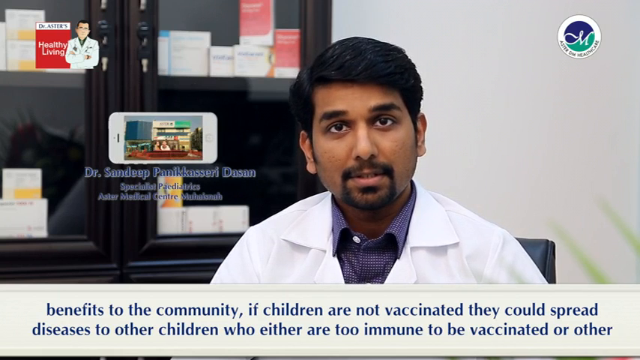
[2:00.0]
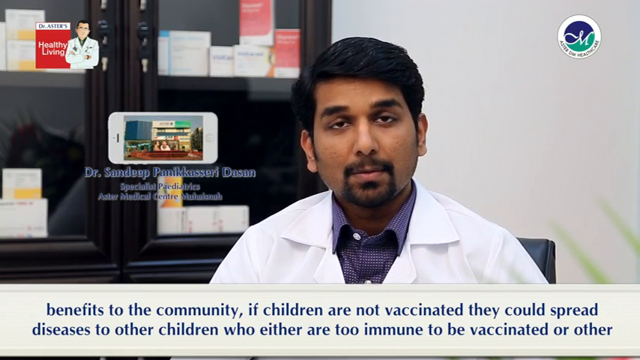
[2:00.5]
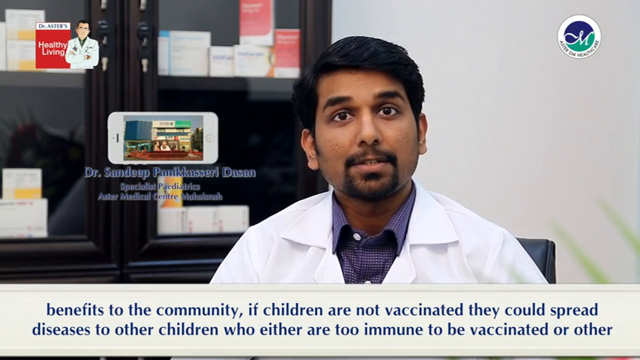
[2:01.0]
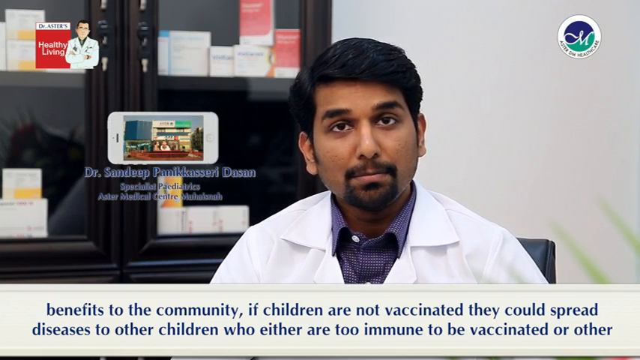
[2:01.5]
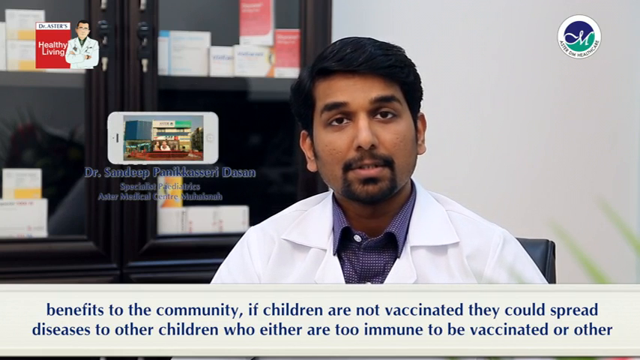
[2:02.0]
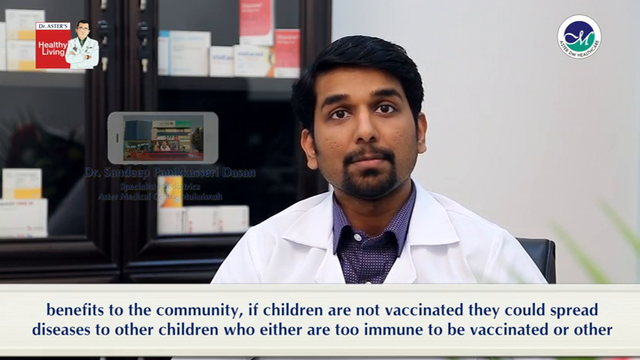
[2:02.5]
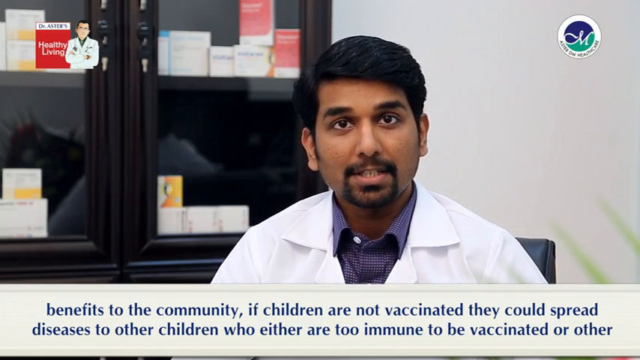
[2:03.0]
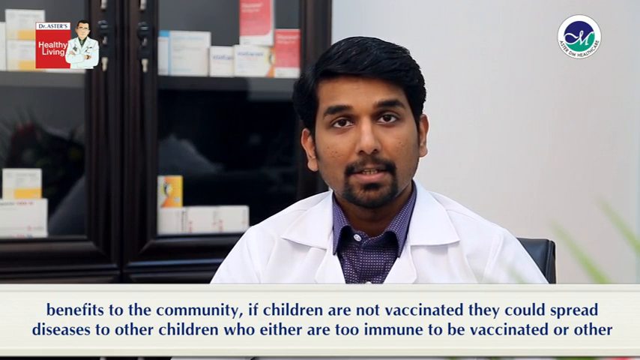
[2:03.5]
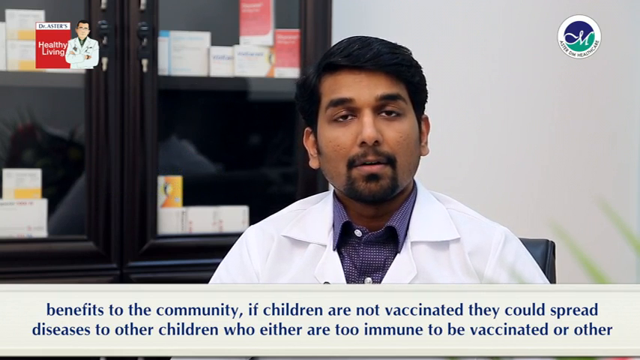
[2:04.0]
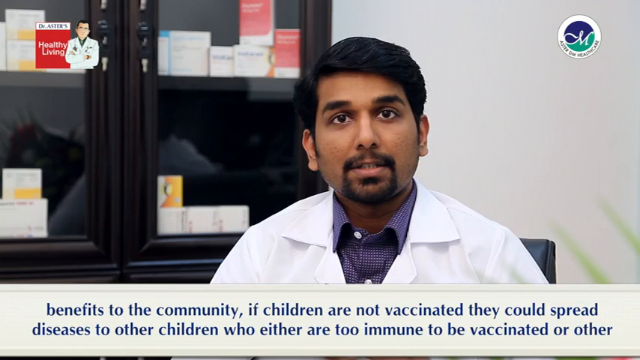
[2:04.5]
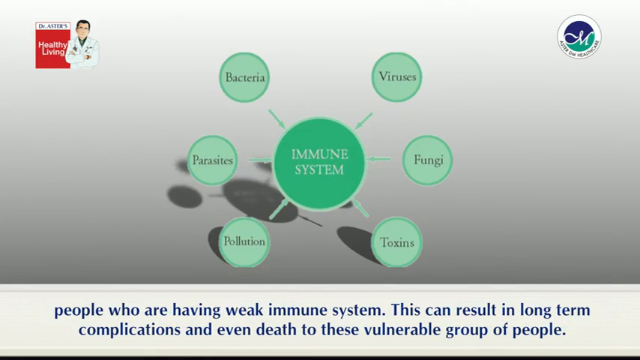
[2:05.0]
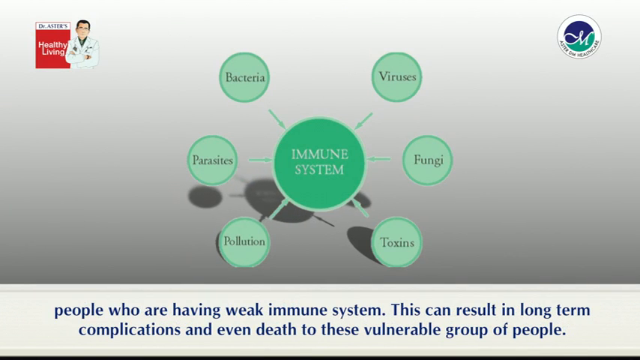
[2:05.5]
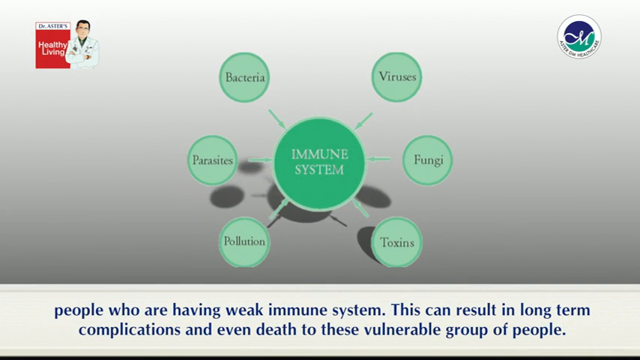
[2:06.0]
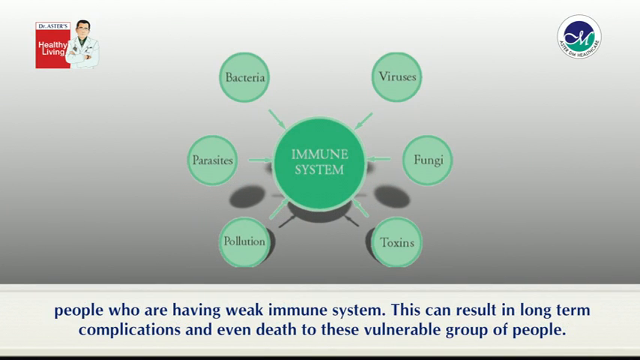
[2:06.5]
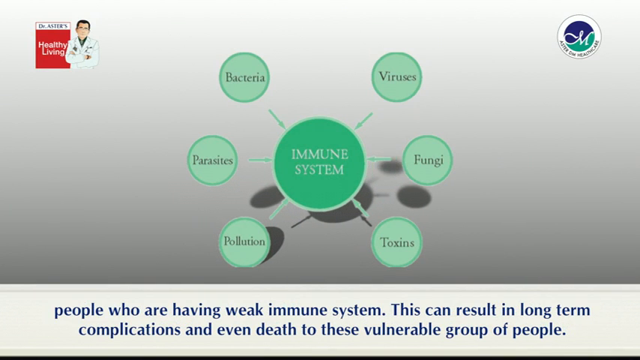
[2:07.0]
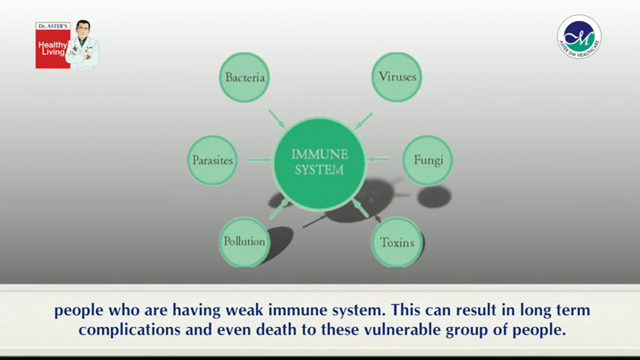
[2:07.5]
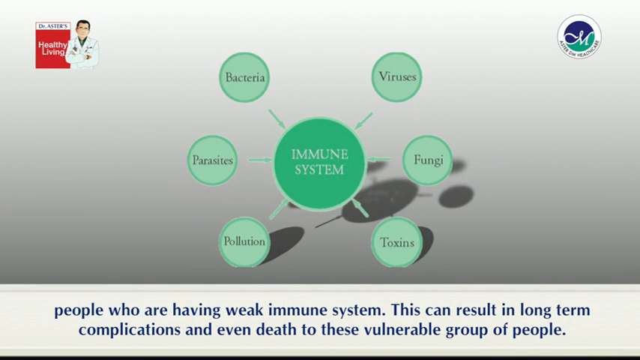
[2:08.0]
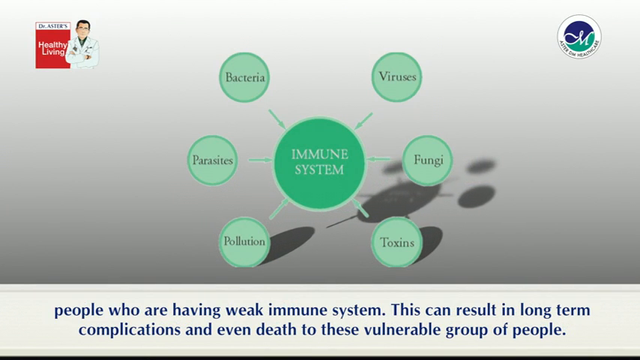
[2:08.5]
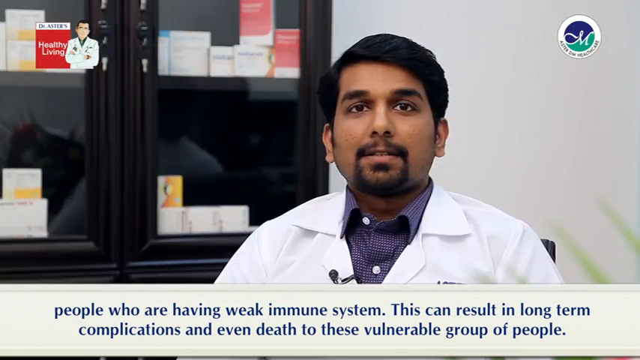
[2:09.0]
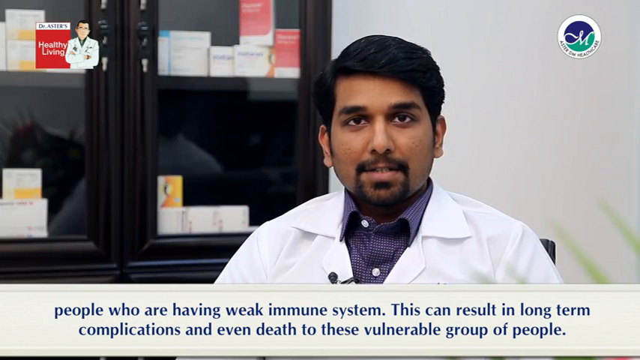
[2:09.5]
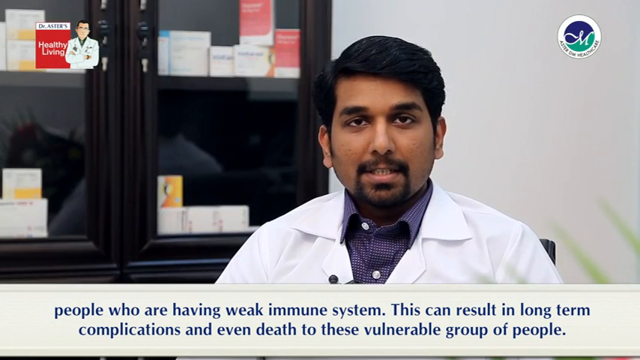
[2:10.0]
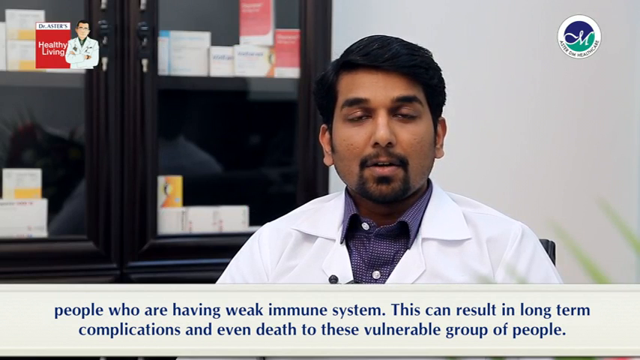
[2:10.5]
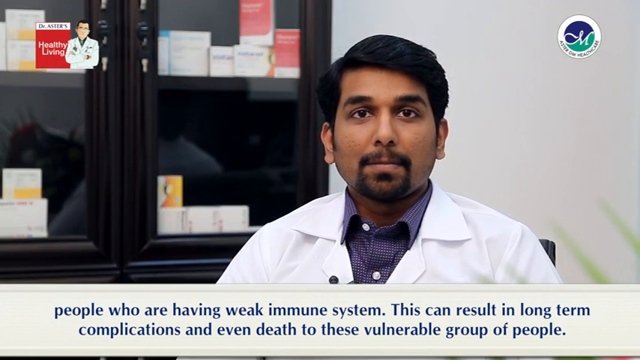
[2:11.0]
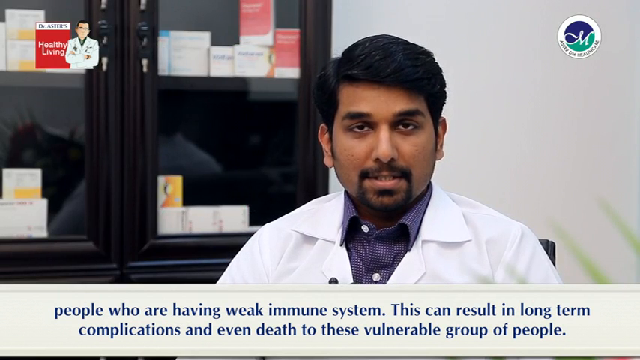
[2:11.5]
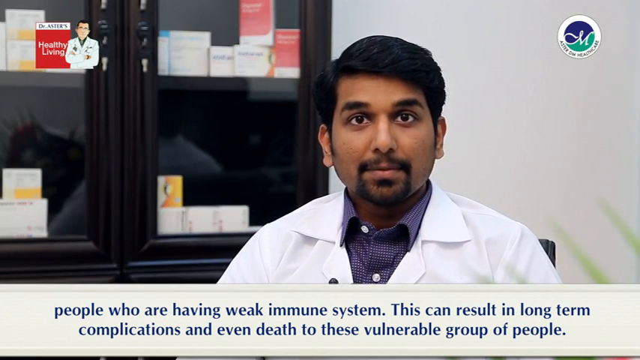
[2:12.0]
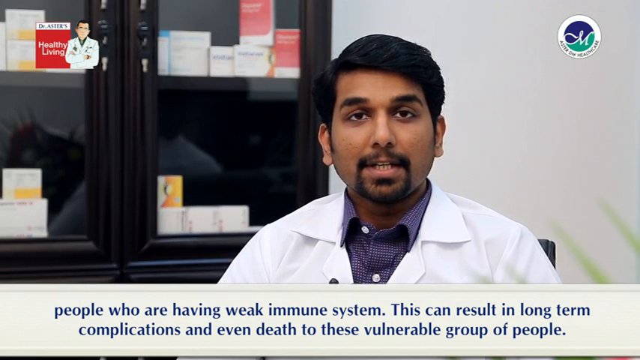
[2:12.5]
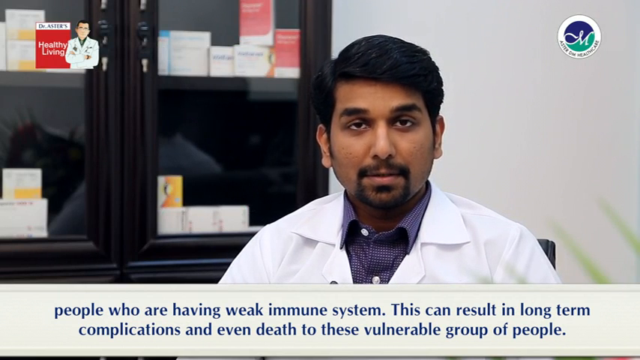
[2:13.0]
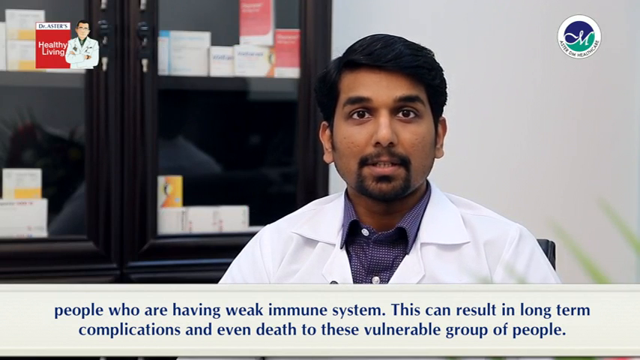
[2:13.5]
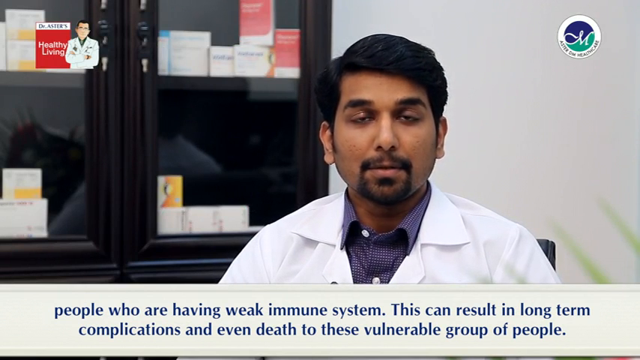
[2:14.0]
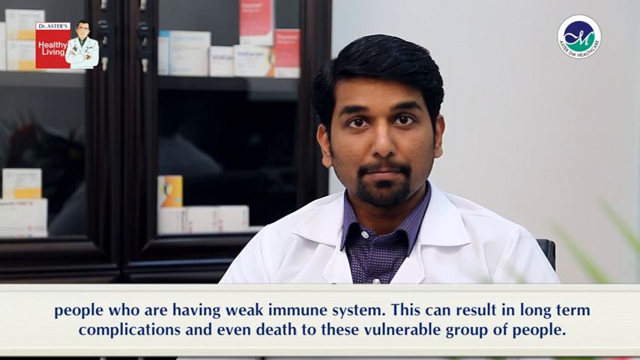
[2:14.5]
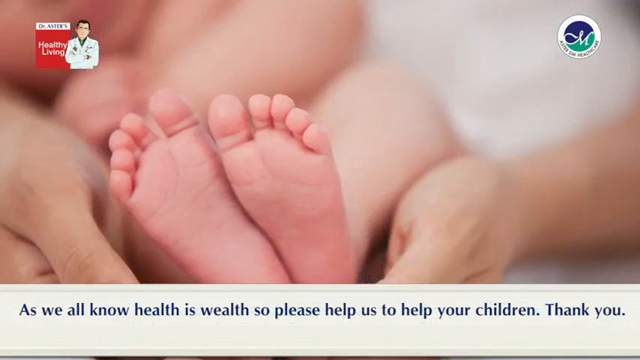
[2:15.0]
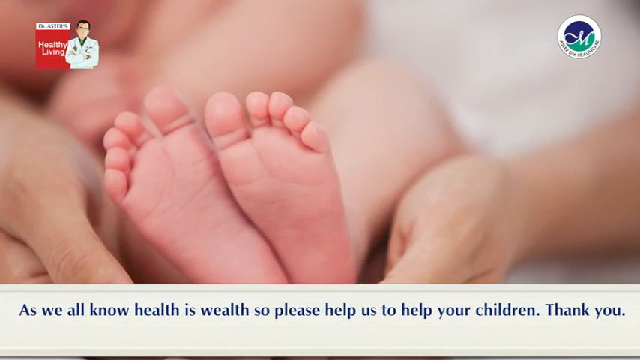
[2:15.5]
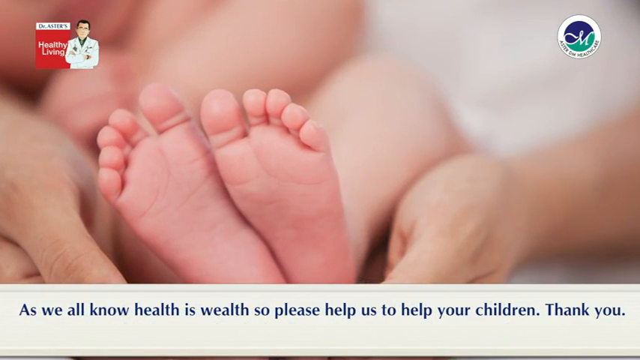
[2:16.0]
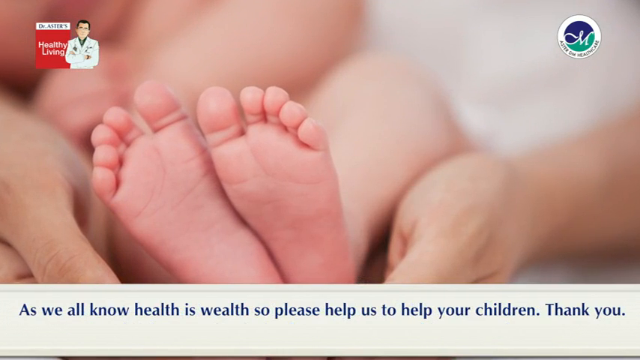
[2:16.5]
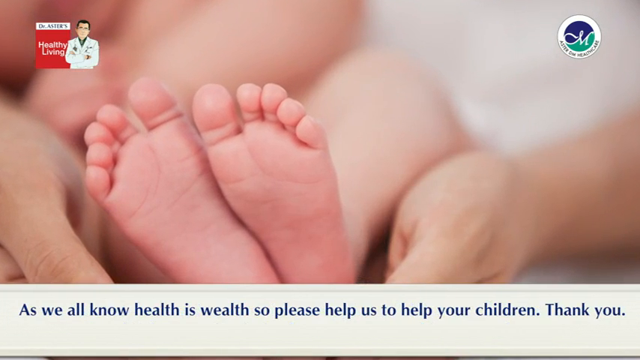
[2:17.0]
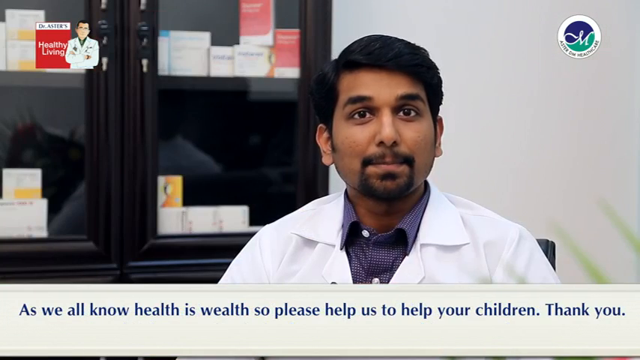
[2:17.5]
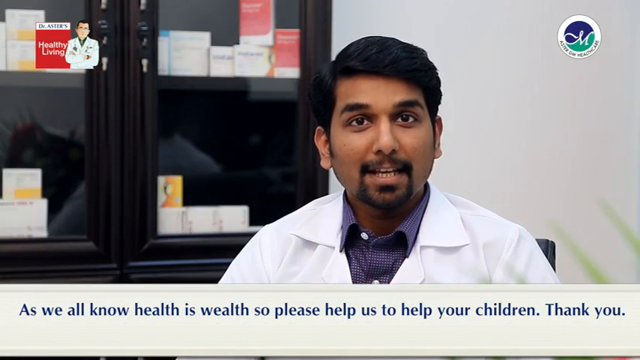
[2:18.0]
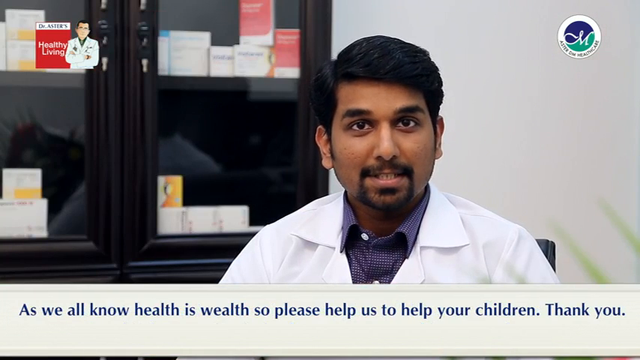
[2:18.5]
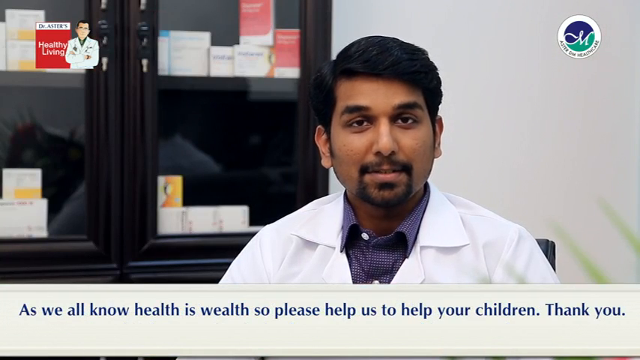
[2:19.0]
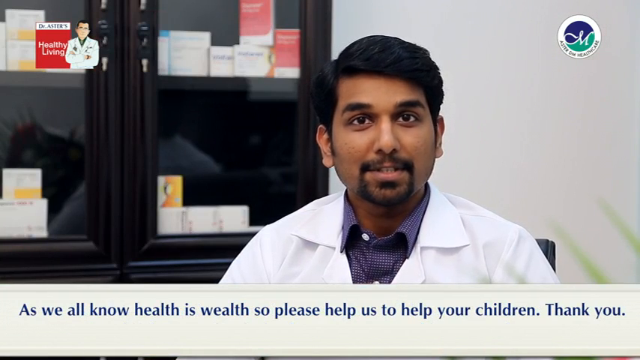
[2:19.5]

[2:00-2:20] On a gray screen, a green circle in the middle reads "immune system." Around it are six other circles, each with a different word: "bacteria," "virus," "fungi," "toxins," "pollution," and "parasites." Blue text appears along the bottom of the screen: "people who are having weak immune system, this can result in long term complications and even death to these vulnerable groups of people." The video then cuts to an Indian man with black hair and a black goatee sitting down and speaking to the camera, wearing a purple collared shirt with a white doctor's coat over it. Behind him, over his right shoulder, is a black bookcase with shelves of different sizes and boxes of different colors on the shelves; over his left shoulder is a white wall.